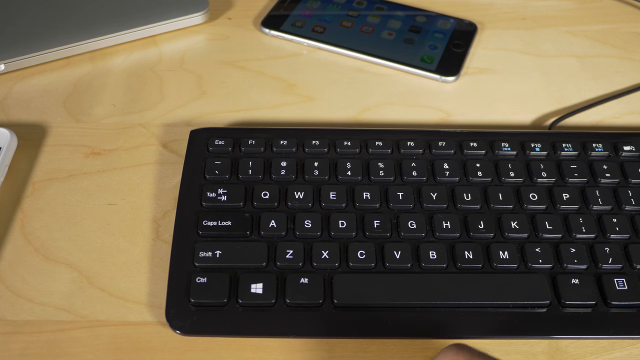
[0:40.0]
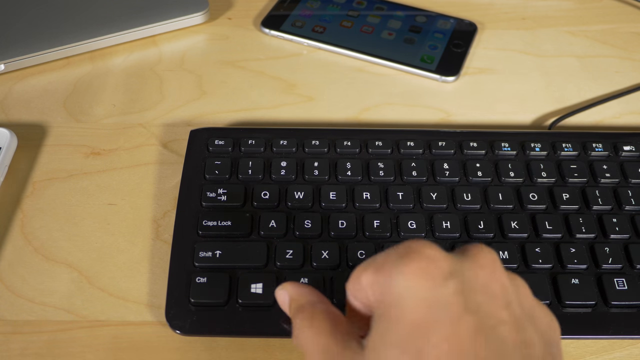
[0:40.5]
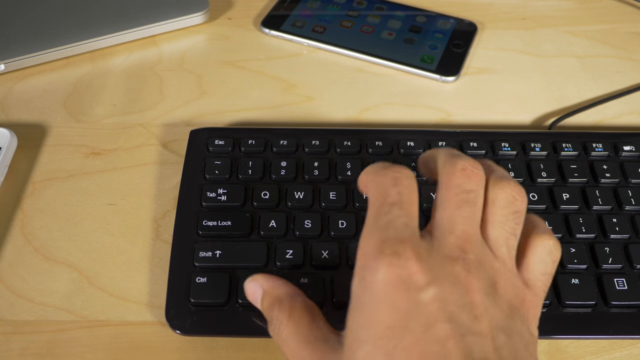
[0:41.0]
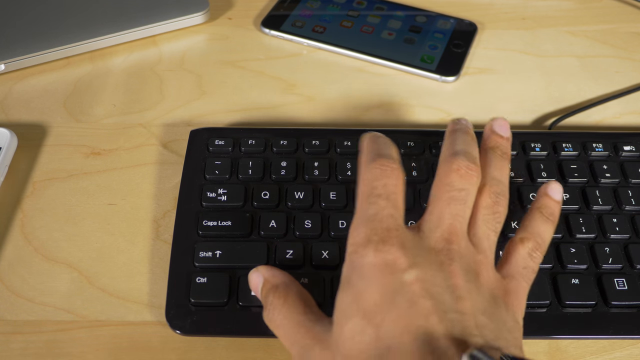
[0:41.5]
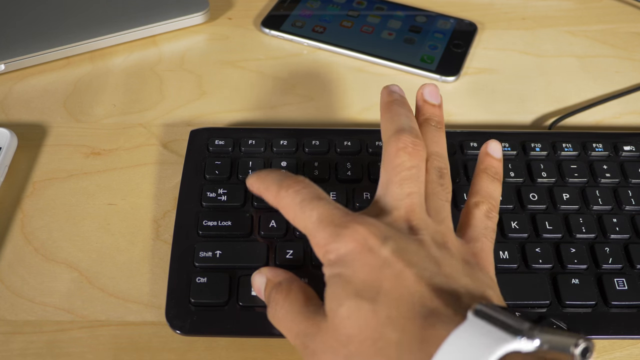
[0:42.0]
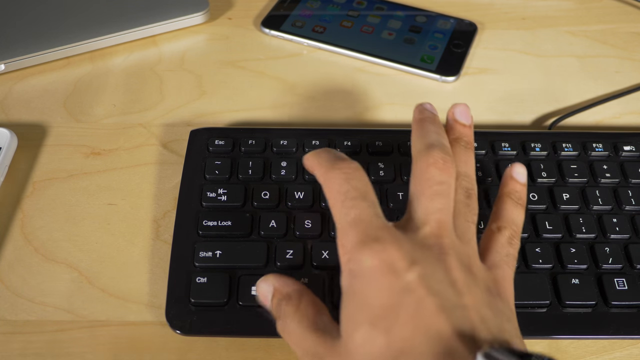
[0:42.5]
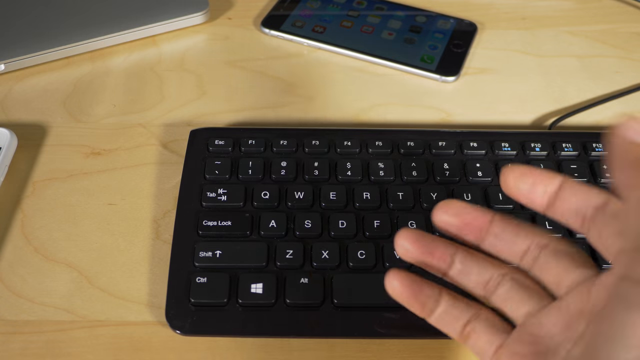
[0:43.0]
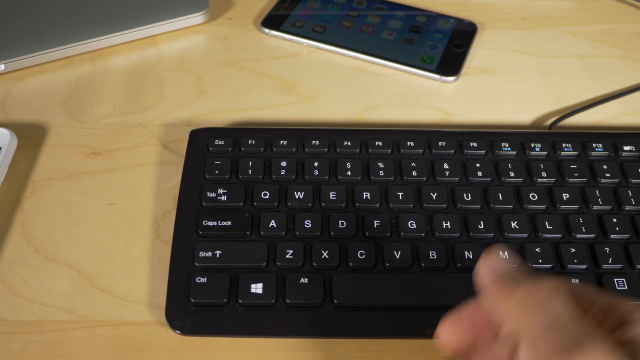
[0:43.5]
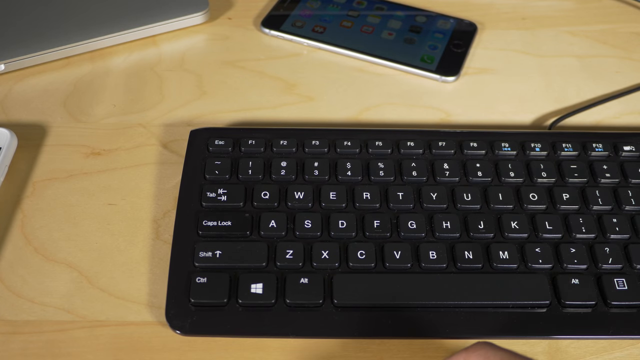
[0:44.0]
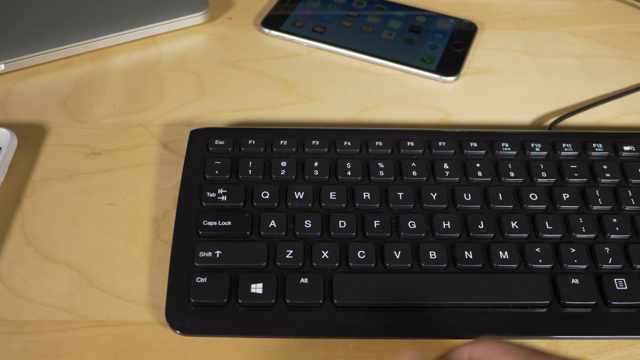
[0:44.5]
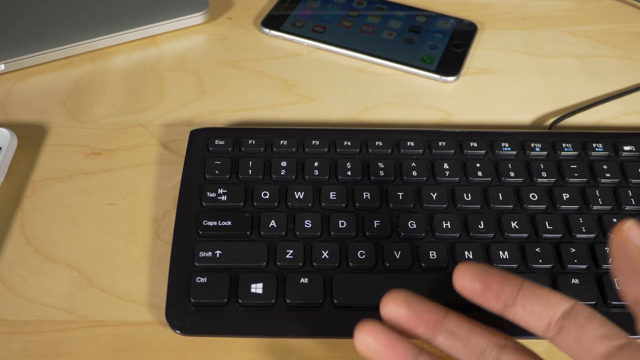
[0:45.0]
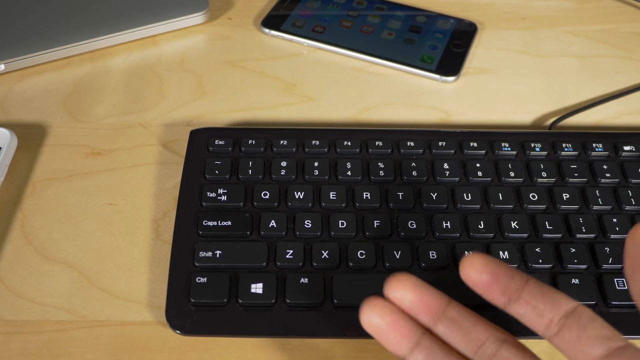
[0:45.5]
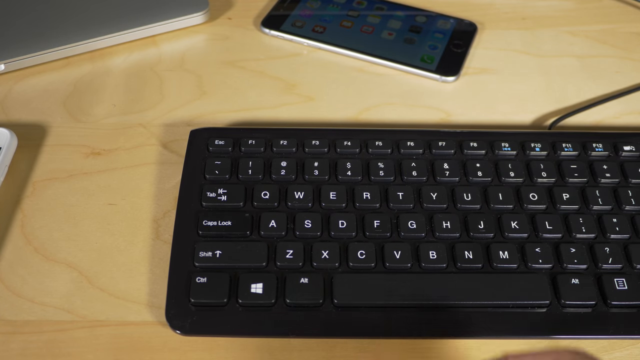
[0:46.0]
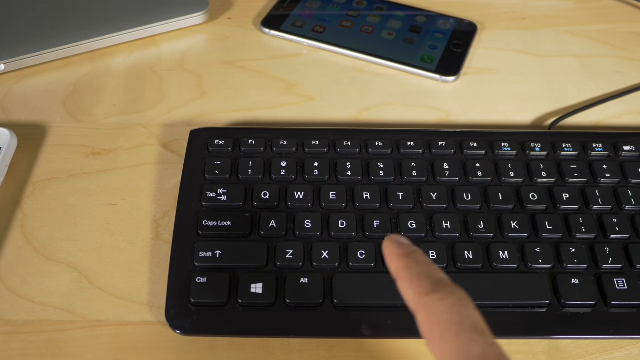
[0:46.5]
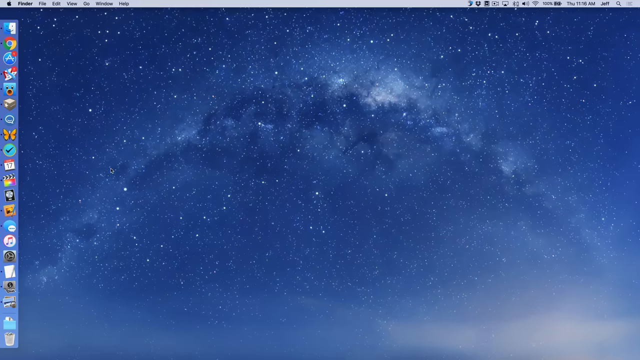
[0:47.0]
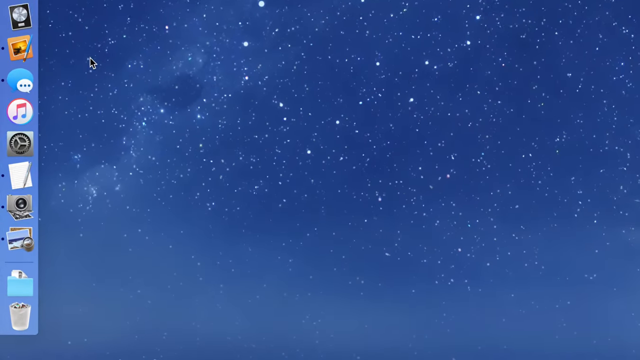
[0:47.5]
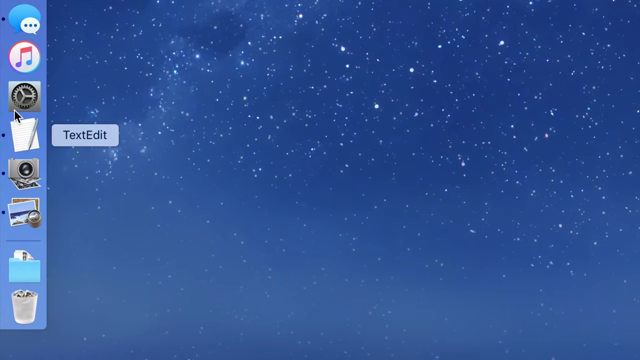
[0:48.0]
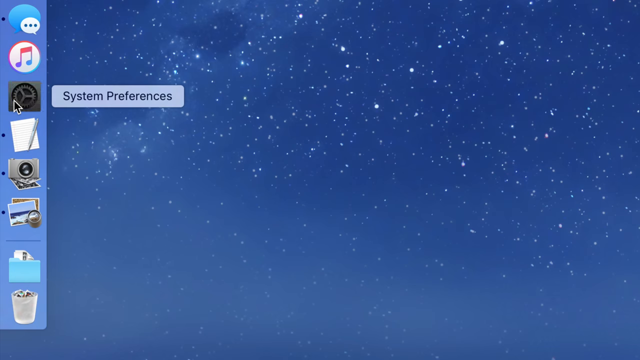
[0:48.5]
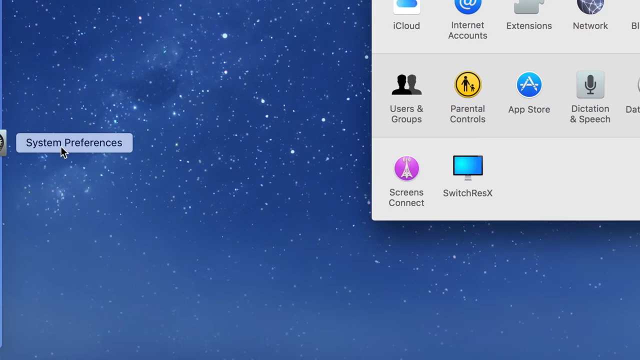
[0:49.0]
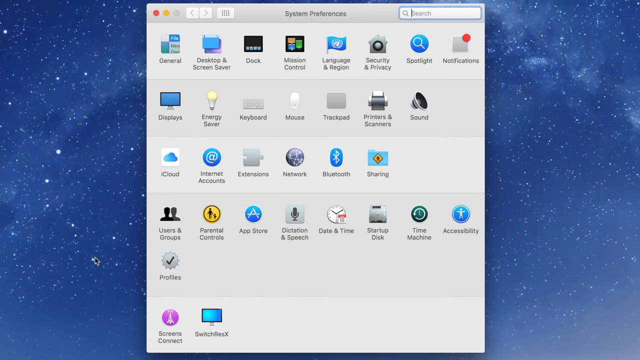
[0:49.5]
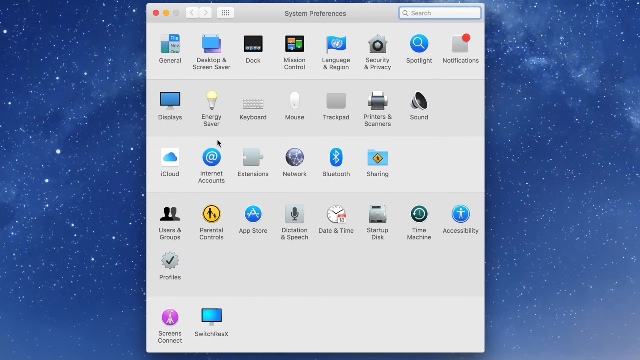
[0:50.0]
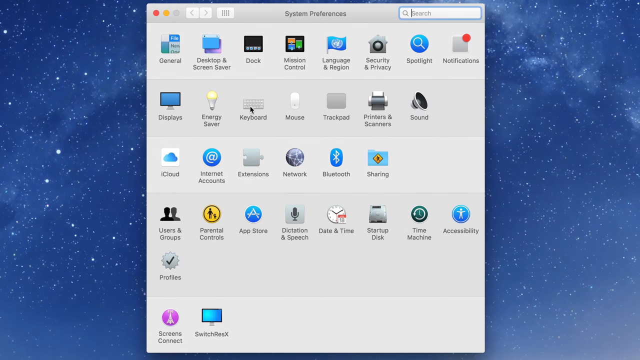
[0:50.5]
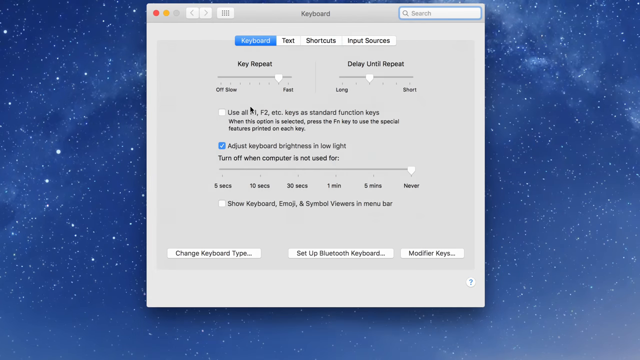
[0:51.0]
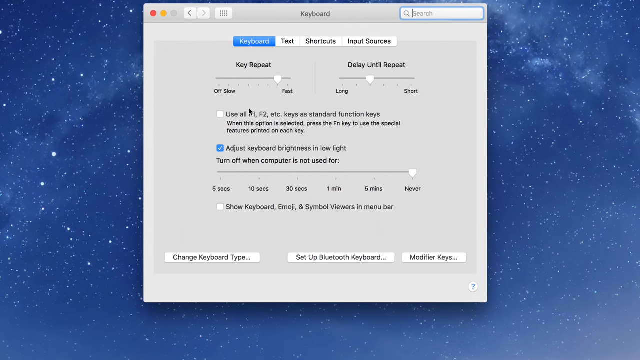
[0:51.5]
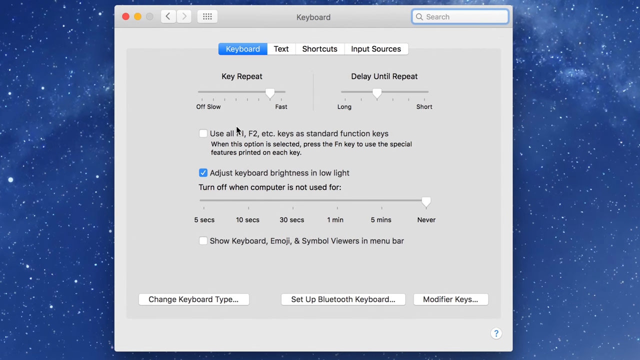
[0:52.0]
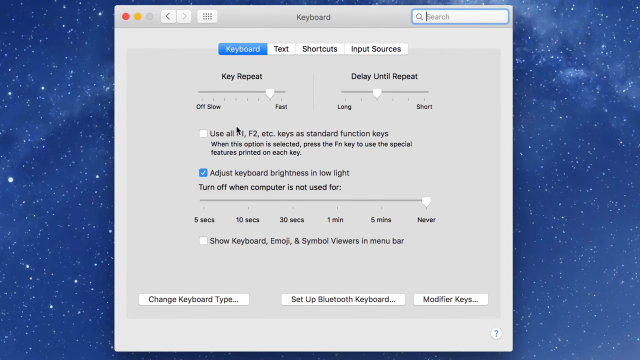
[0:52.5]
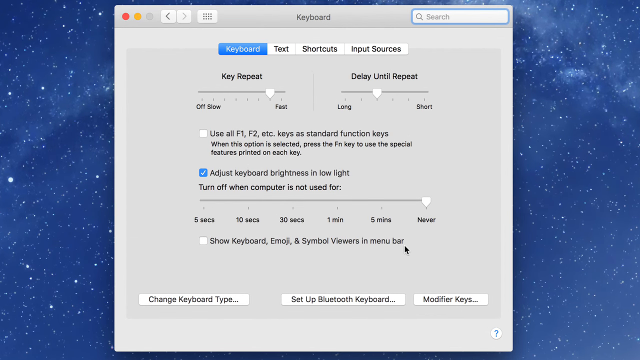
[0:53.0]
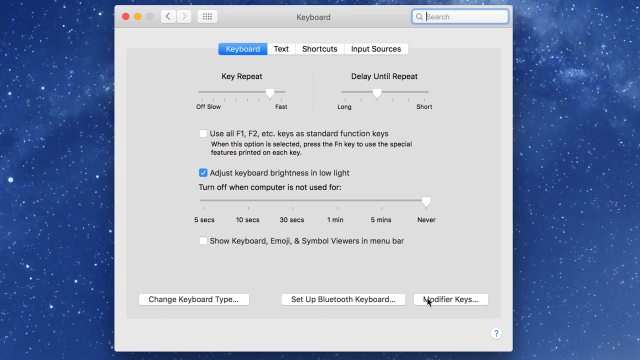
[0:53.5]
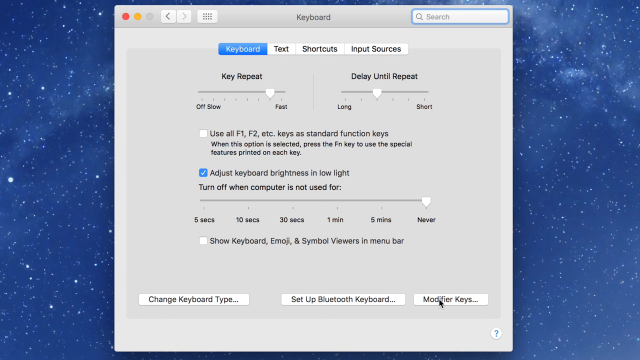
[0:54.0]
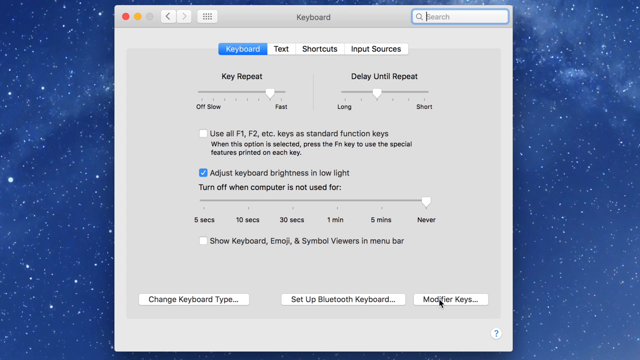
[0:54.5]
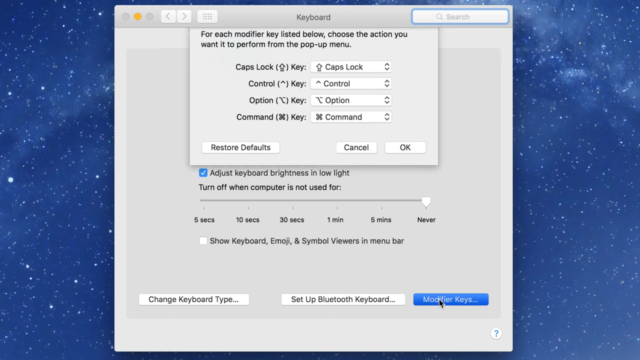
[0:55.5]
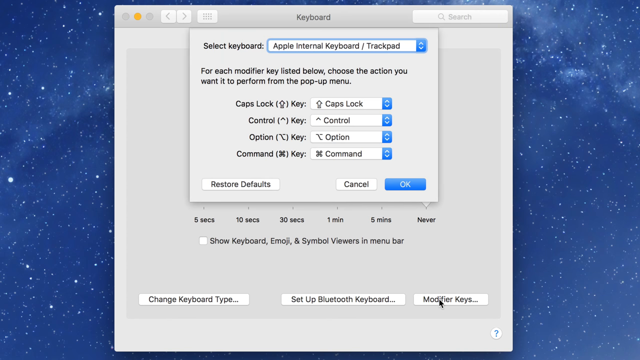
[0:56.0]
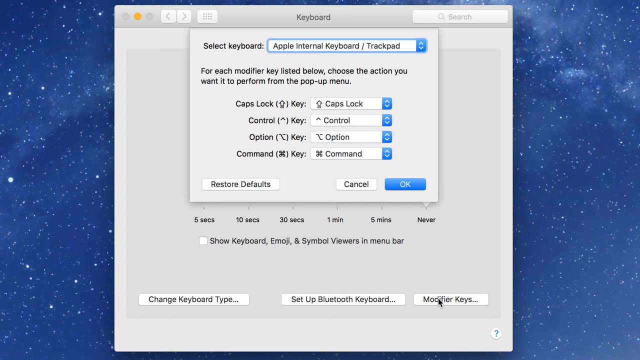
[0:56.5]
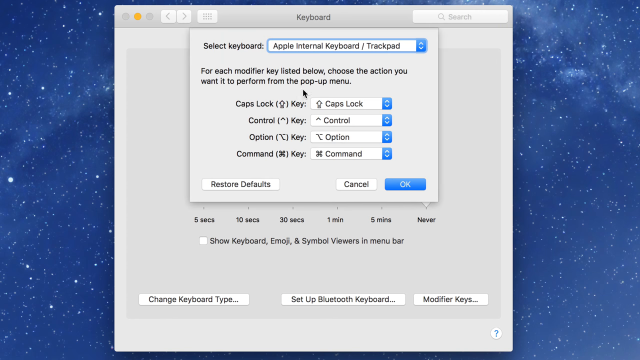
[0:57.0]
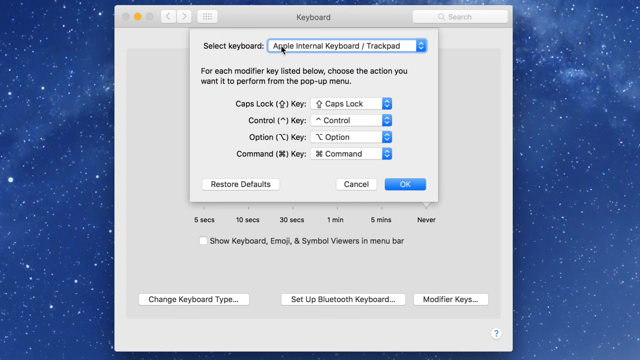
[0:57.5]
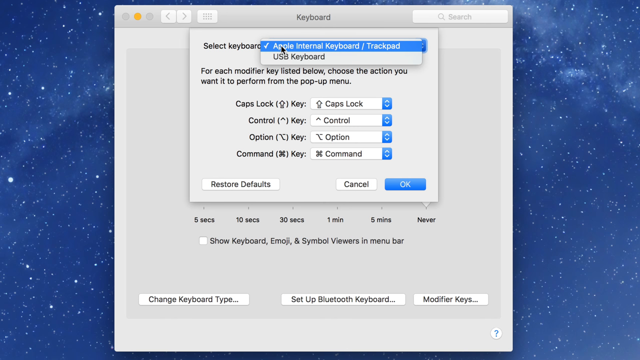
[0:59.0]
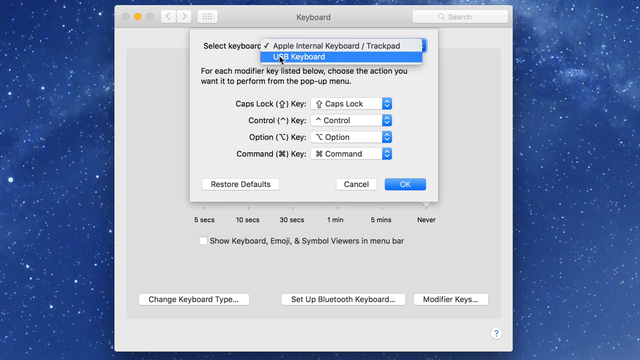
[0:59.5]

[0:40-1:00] A black keyboard and a smartphone are at the top of the screen on a light wood table, and a hand, which appears to be a right hand, comes into view. The person presses what looks like the Windows icon key at the bottom together with the Q button. They raise the hand so the palm is visible, lower it, raise it again, and kind of point at the space bar for a moment. The view then changes to what looks like a screen of the sky with some sort of constellation, with a row of icons on the left side; it is possibly a computer screen. The mouse cursor goes to System Preferences and clicks it, and System Preferences opens with multiple rows of options. They click Keyboard, the view zooms in a little, and they click Modifier Keys. They then go to select keyboard, where it says "Apple internal keyboard/trackpad", click on it and change it to USB keyboard.